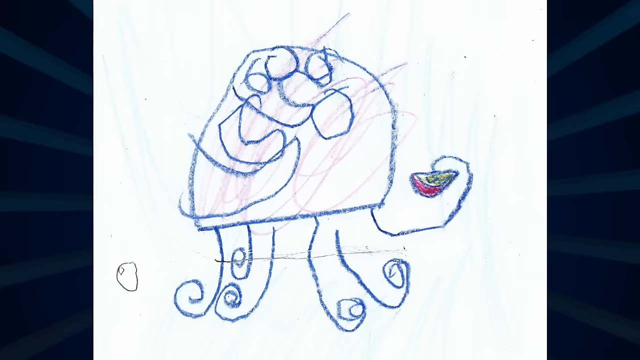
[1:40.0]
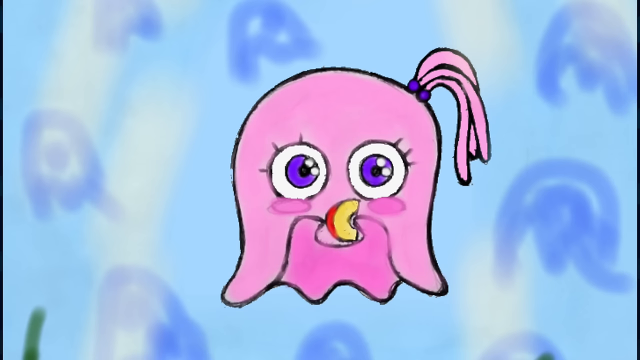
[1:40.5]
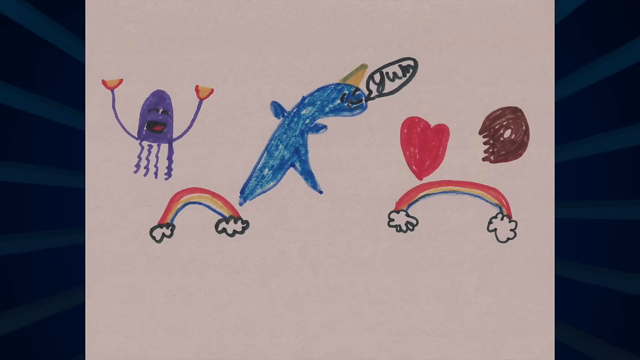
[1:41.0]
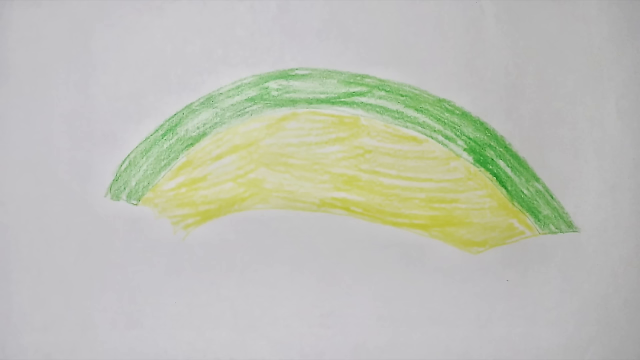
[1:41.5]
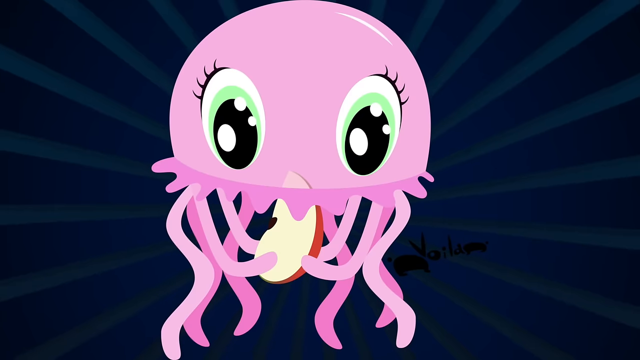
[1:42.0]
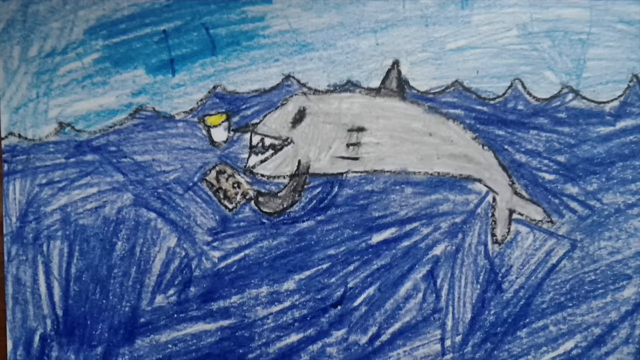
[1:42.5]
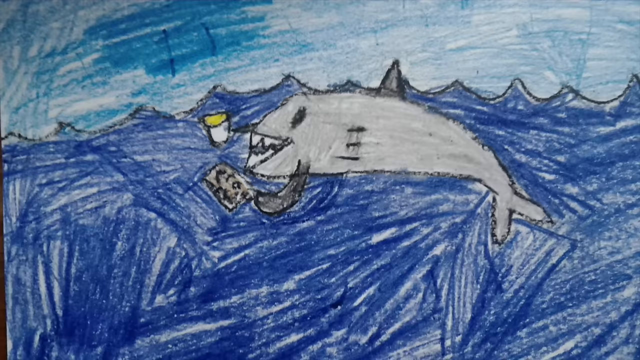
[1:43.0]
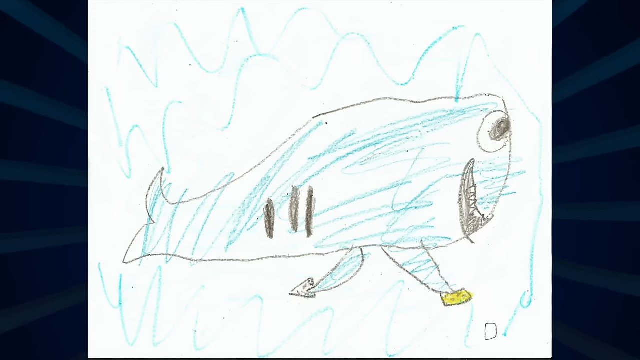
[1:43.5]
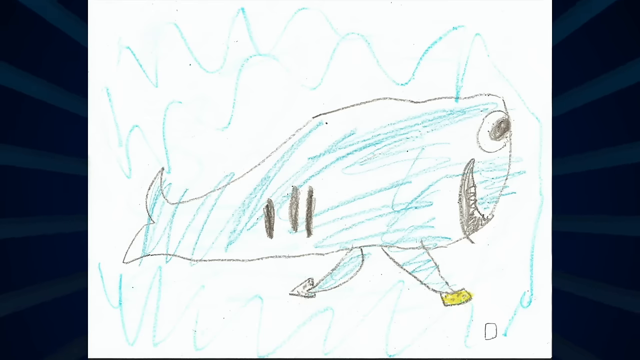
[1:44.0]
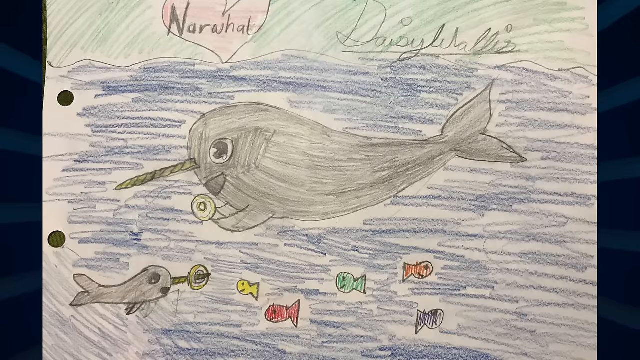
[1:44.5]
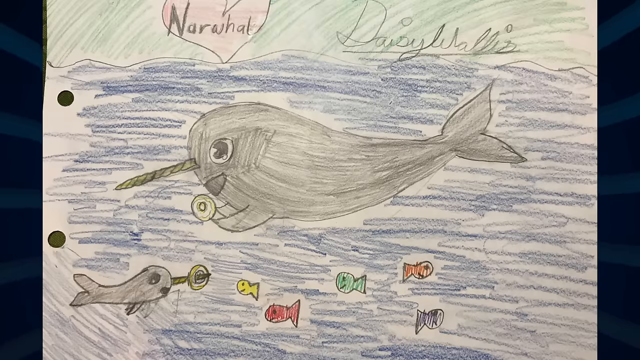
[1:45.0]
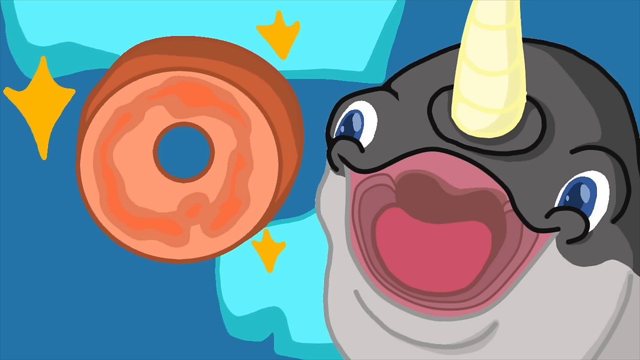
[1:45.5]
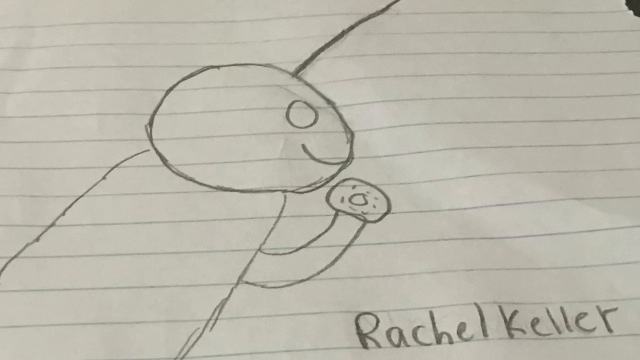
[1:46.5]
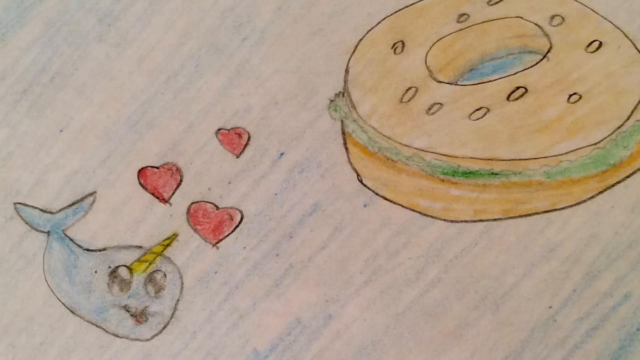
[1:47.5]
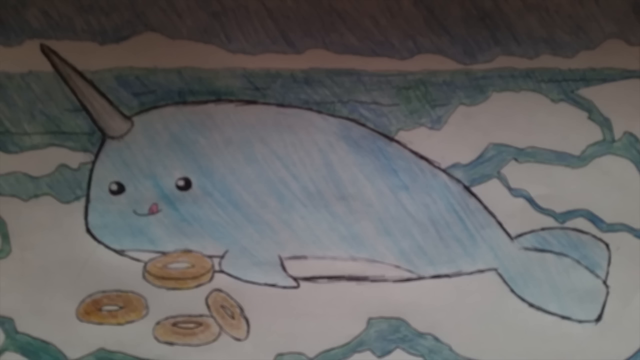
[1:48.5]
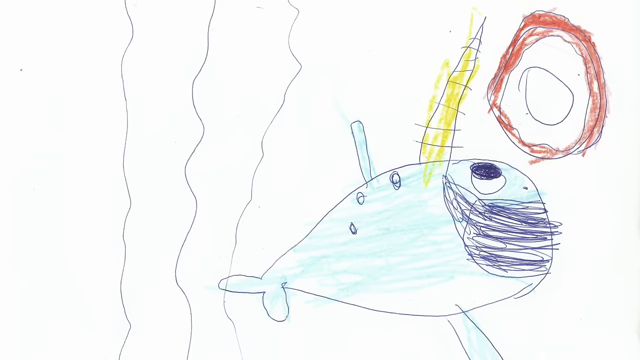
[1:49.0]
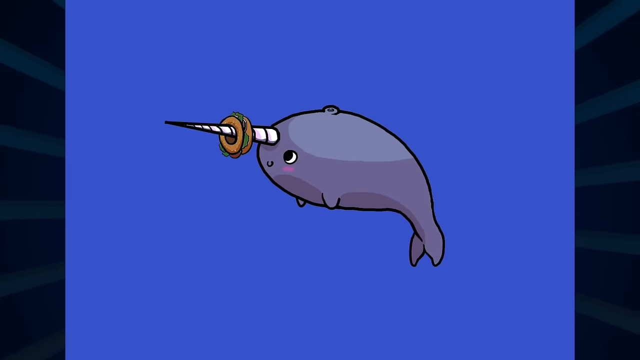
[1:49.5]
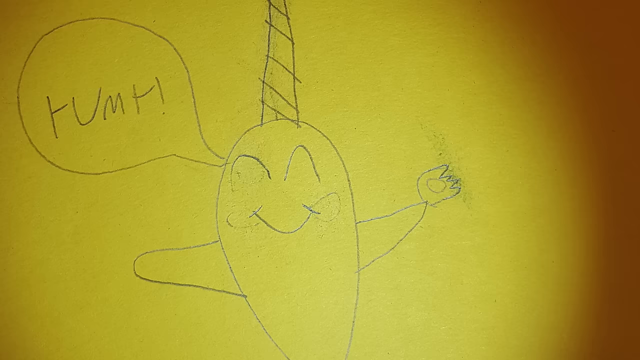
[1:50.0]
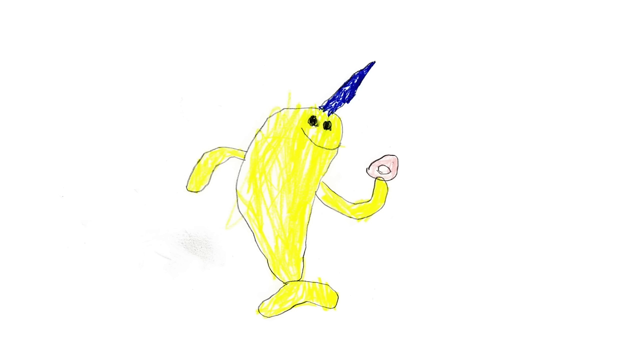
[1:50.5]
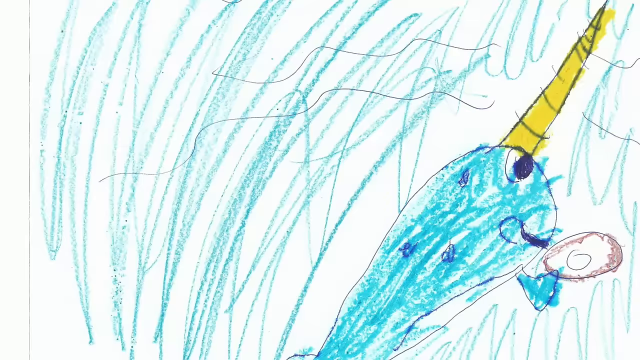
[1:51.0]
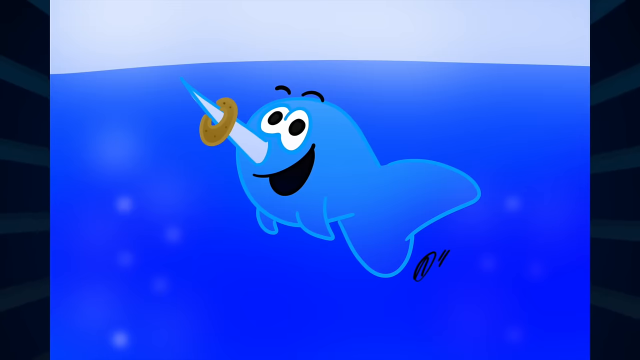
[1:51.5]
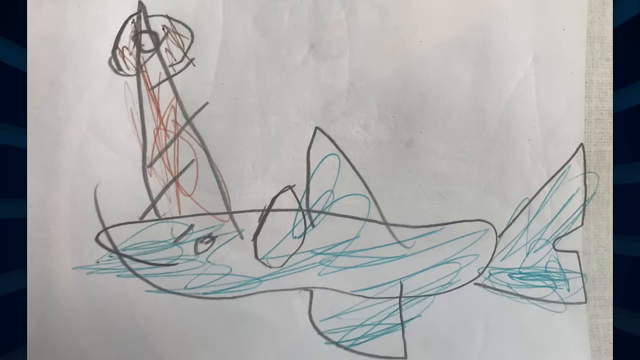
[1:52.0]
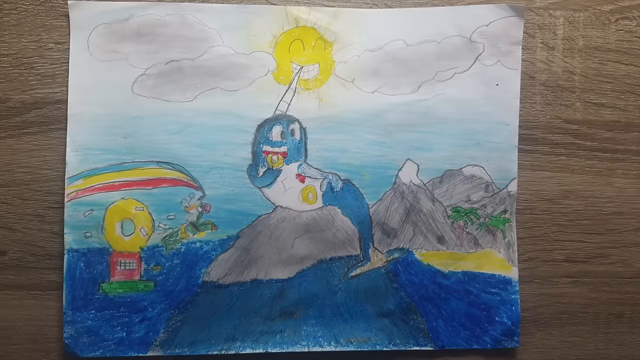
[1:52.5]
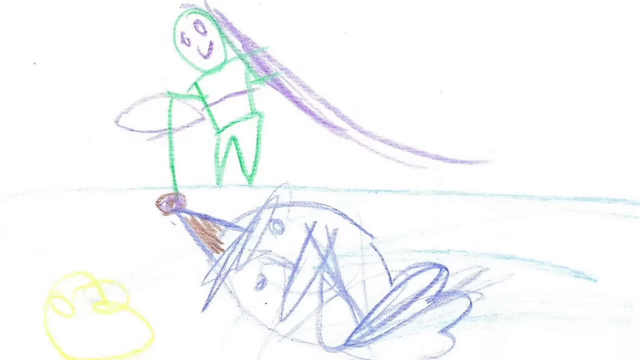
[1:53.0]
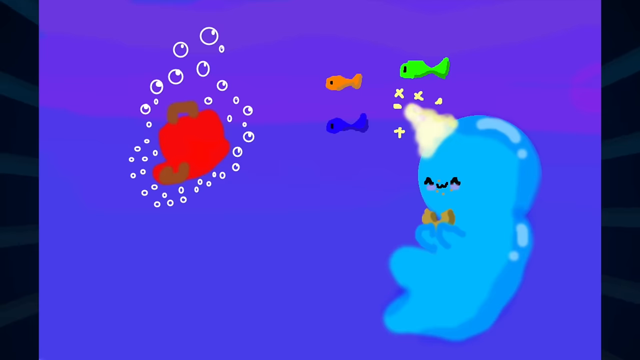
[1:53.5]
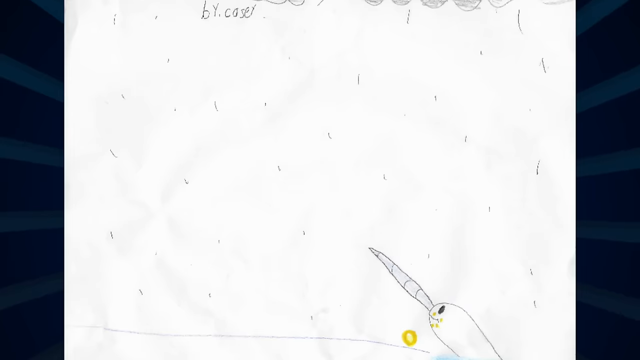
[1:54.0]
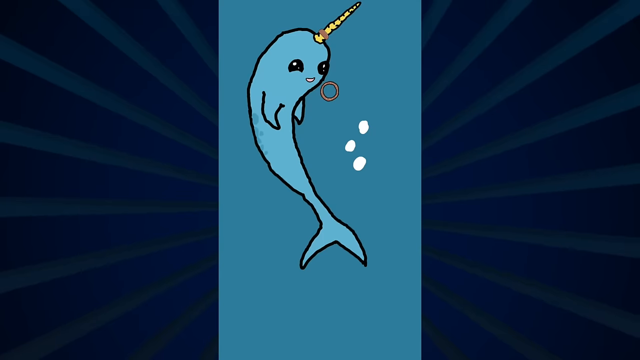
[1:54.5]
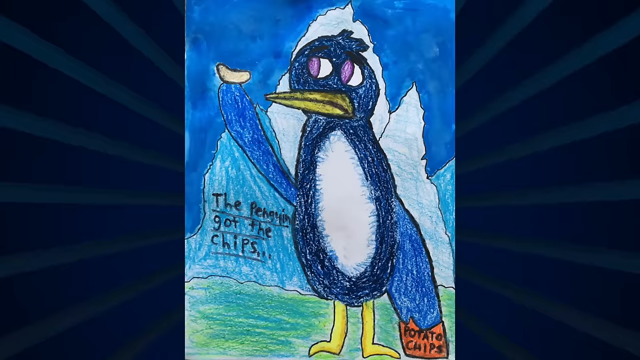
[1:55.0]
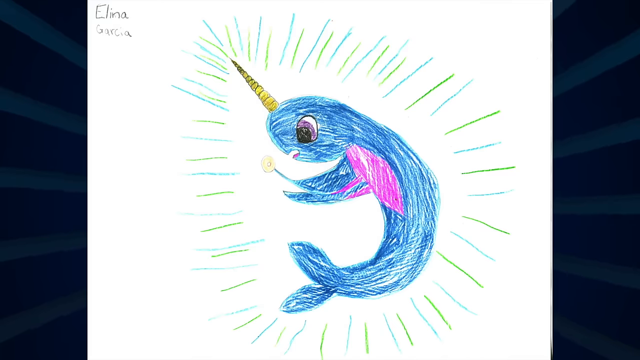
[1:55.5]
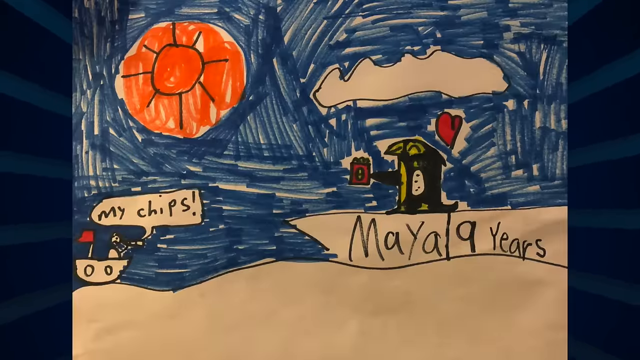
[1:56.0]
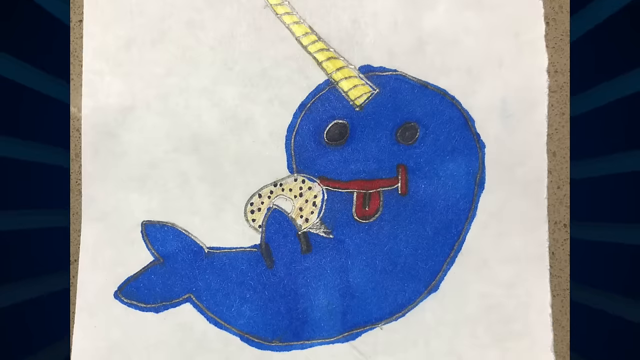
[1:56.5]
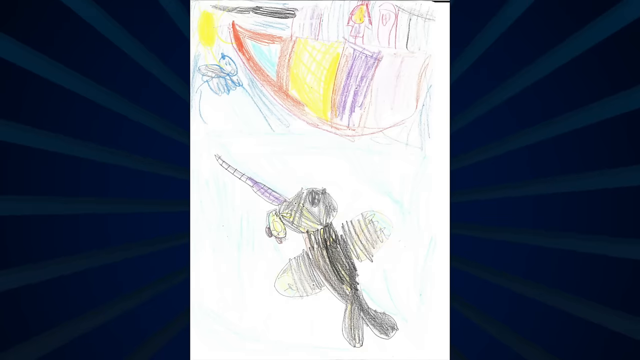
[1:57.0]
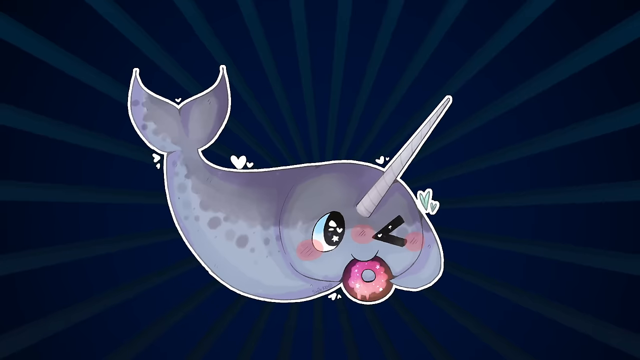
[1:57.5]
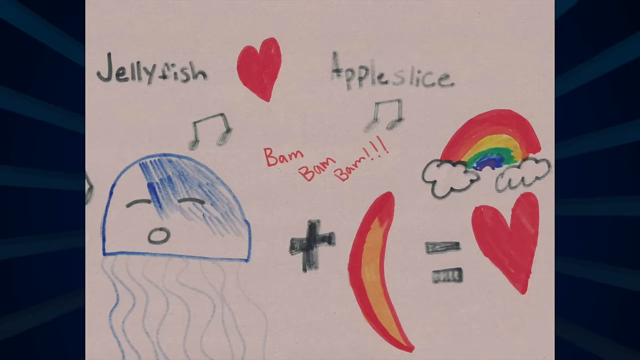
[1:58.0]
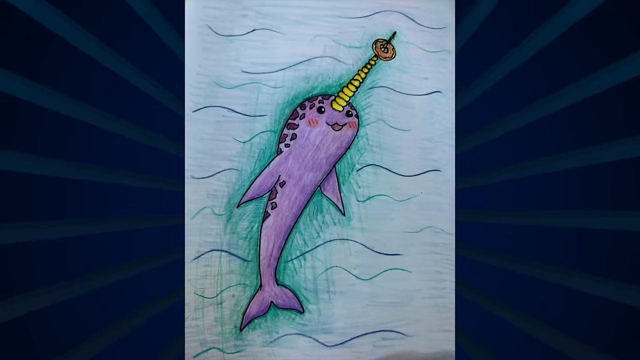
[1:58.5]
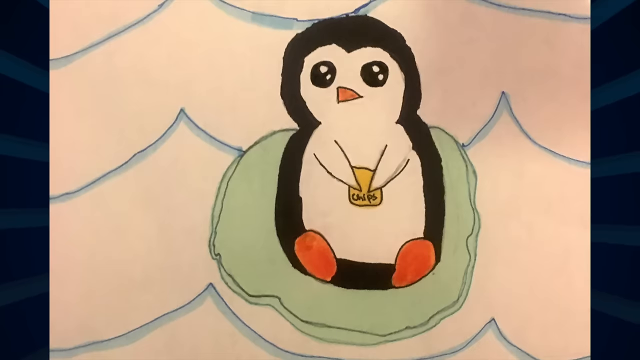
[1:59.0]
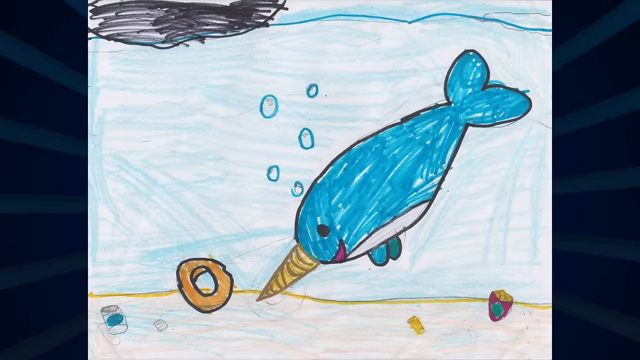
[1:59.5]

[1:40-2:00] A picture shows what appears to be a squid eating a slice of apple. Next is a pink squid with a ponytail and a slice of apple, then a narwhal with rainbows and a squid holding two apple slices. Another pink squid with big anime eyes eats an apple slice. A shark gets ready to eat some food, and another shark holds two food items, one of which appears to be cheese. A narwhal has a baby narwhal near it with a bagel on its horn, and small, colorful fish near the two narwhals. A drawing shows a humongous bagel and the narwhal with hearts coming from it. Multiple drawings show the narwhal's happiness while near or eating the bagel. One drawing shows a penguin holding a single chip and looking disappointed. More drawings of the narwhal follow, then a drawing of a jellyfish plus an apple slice equals love.